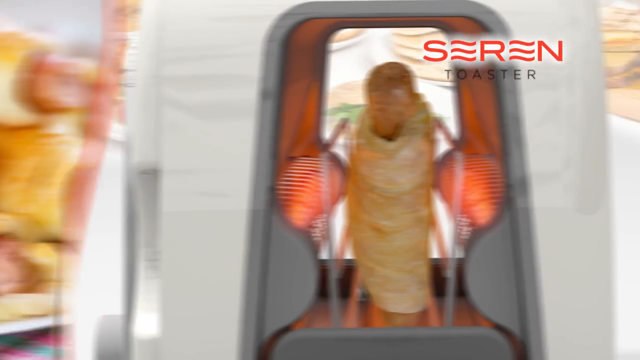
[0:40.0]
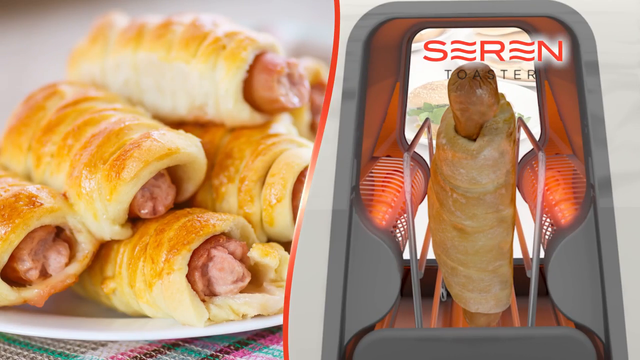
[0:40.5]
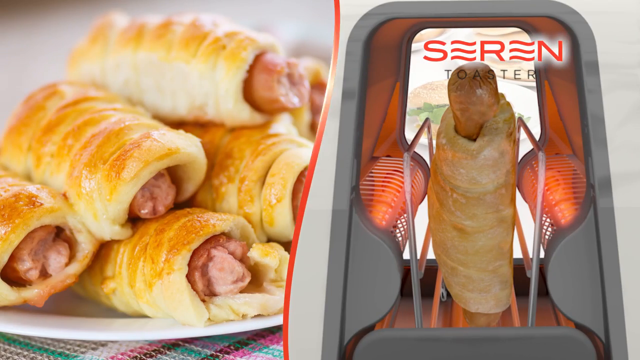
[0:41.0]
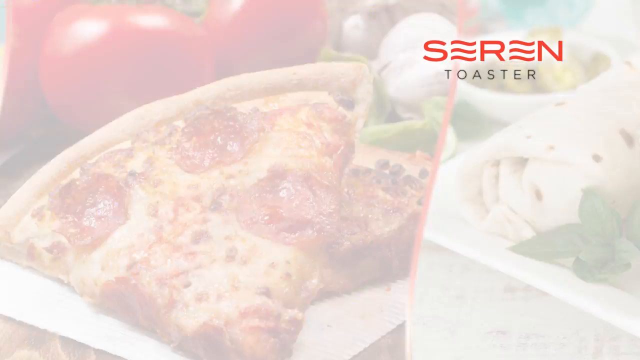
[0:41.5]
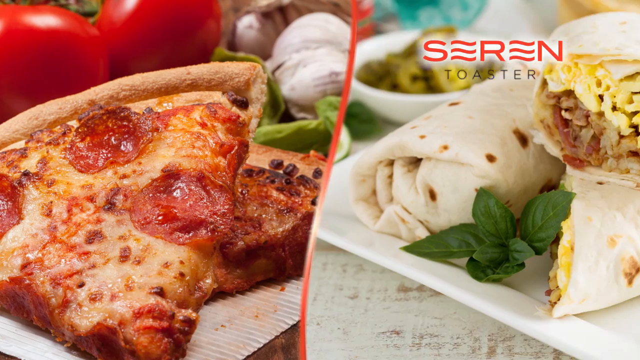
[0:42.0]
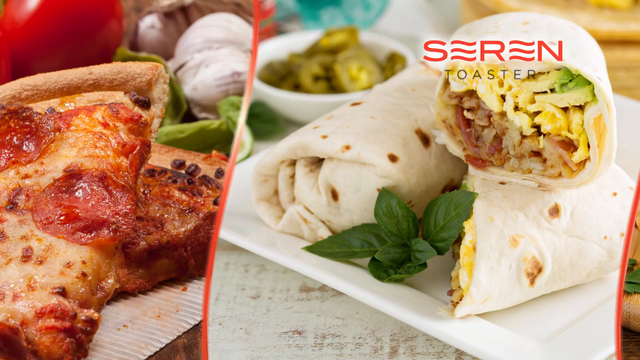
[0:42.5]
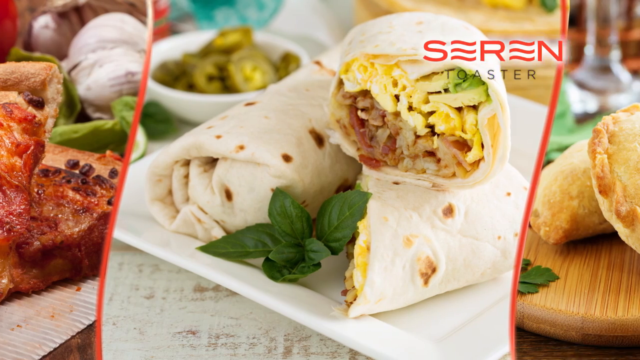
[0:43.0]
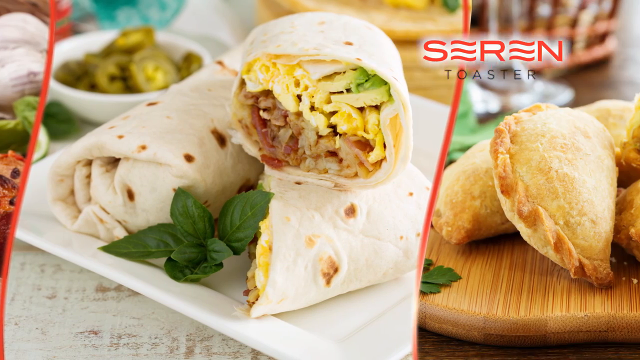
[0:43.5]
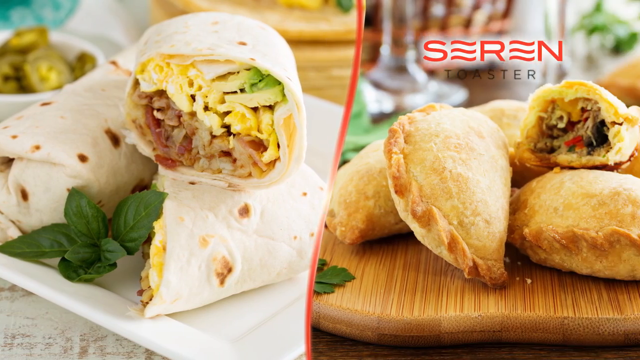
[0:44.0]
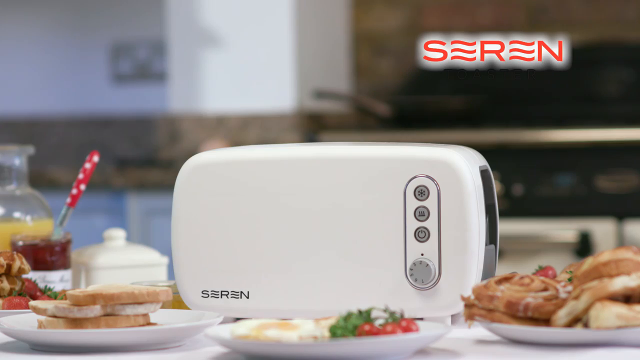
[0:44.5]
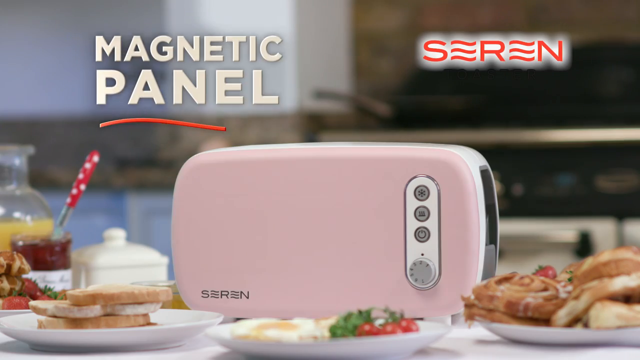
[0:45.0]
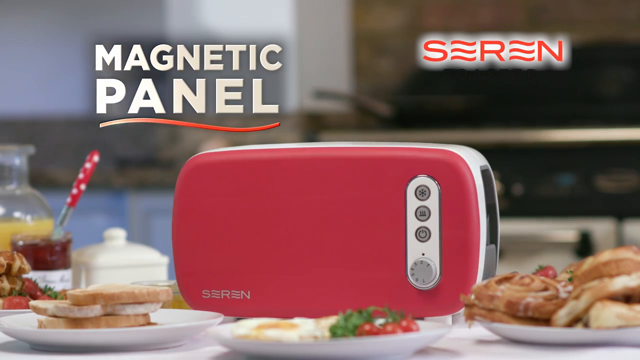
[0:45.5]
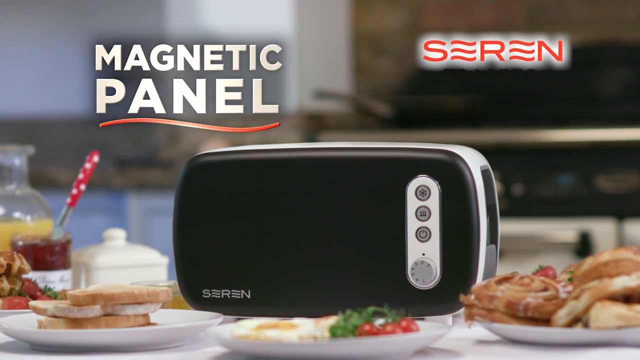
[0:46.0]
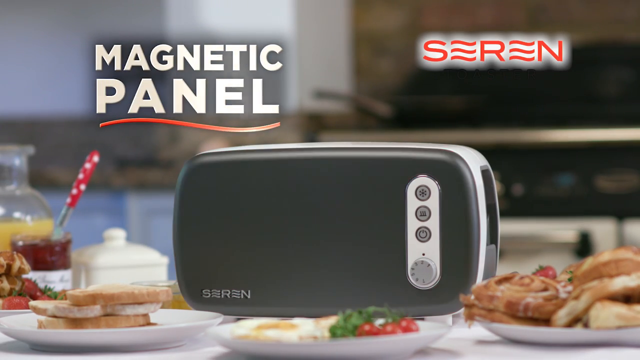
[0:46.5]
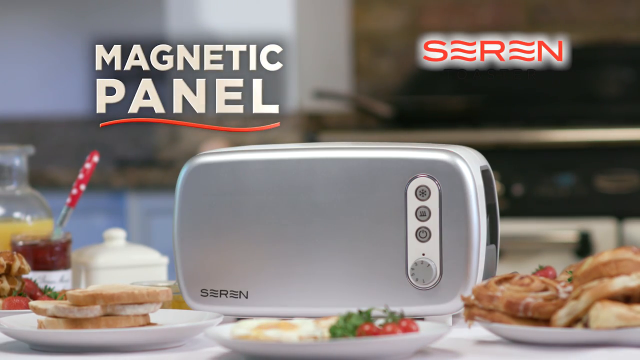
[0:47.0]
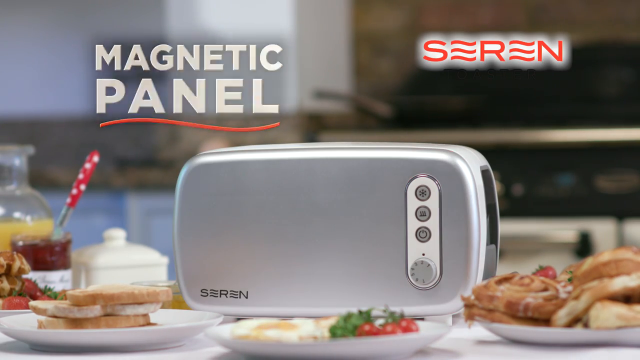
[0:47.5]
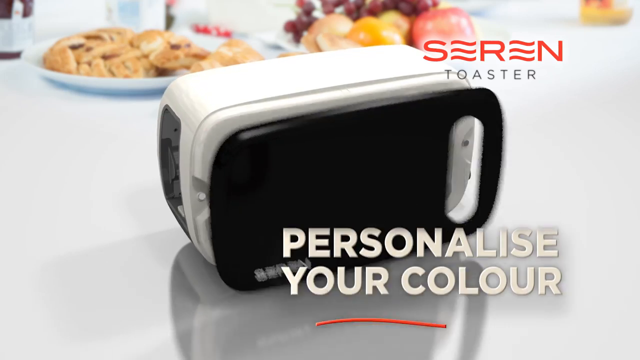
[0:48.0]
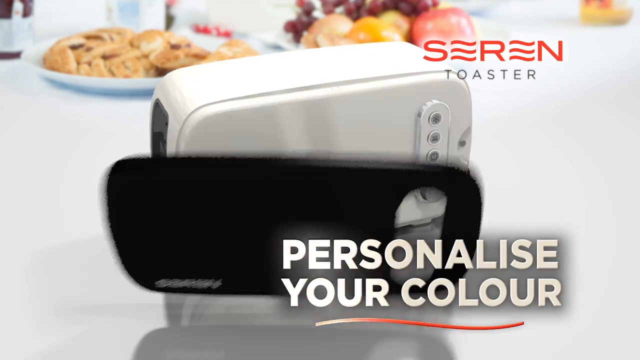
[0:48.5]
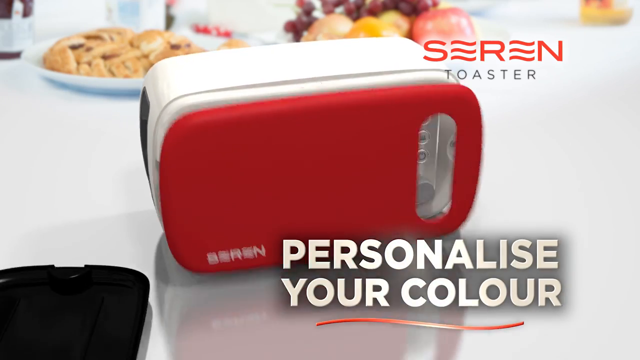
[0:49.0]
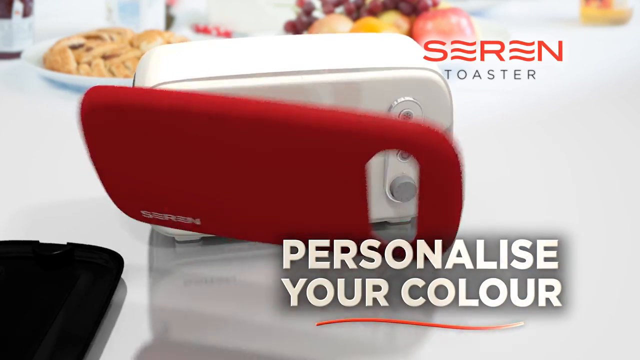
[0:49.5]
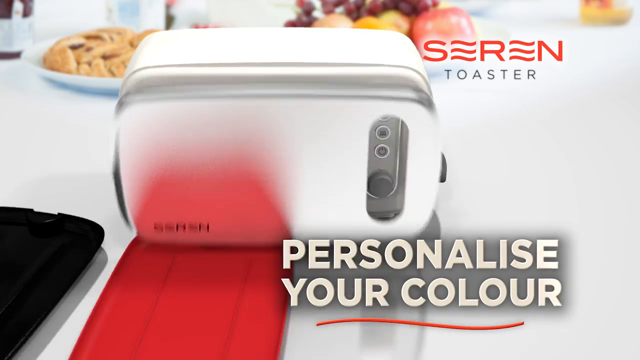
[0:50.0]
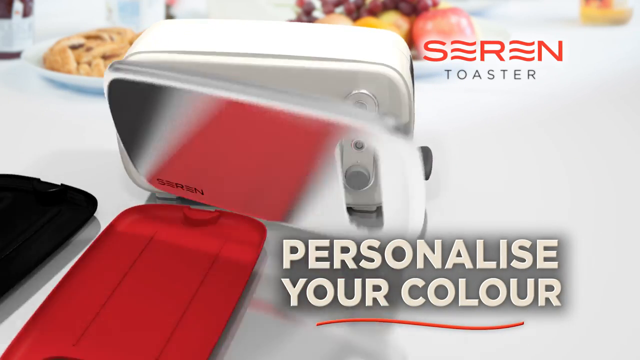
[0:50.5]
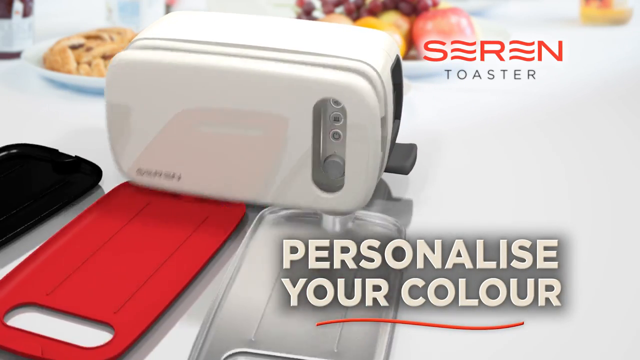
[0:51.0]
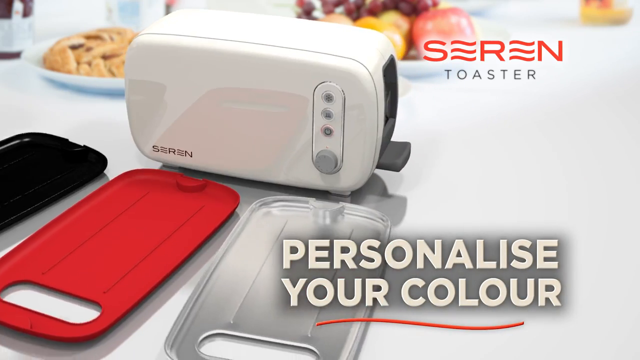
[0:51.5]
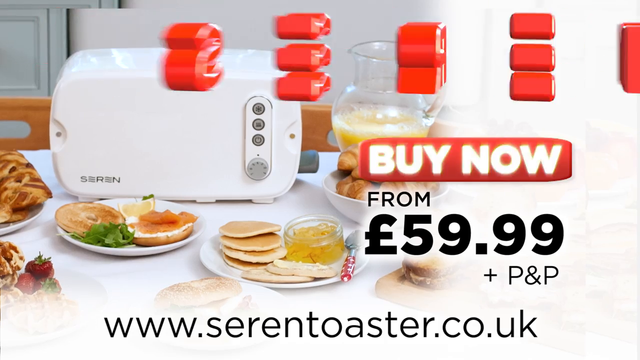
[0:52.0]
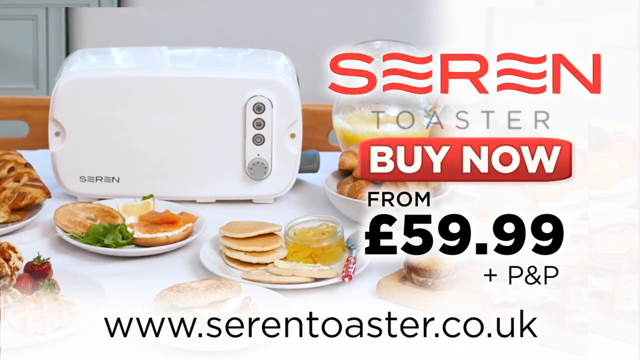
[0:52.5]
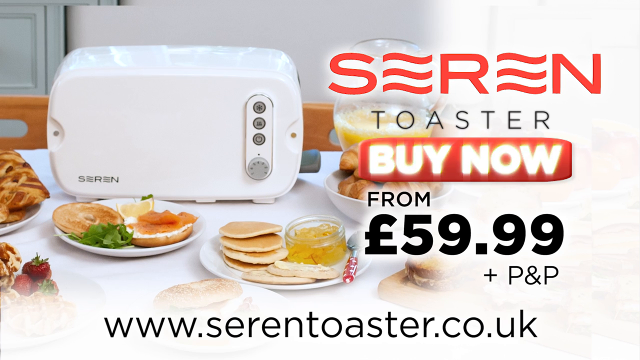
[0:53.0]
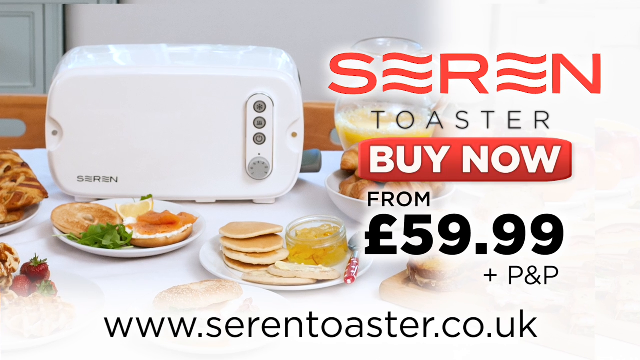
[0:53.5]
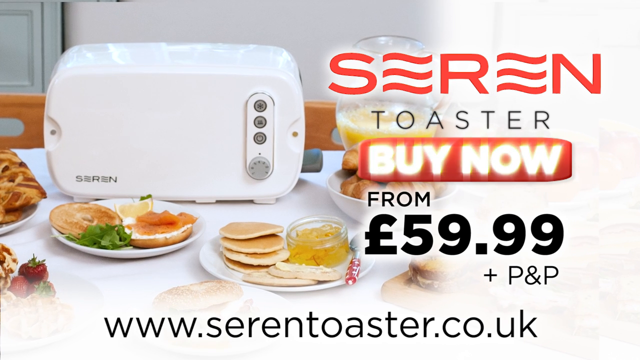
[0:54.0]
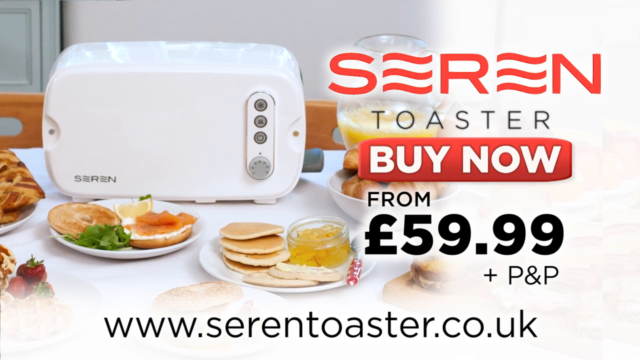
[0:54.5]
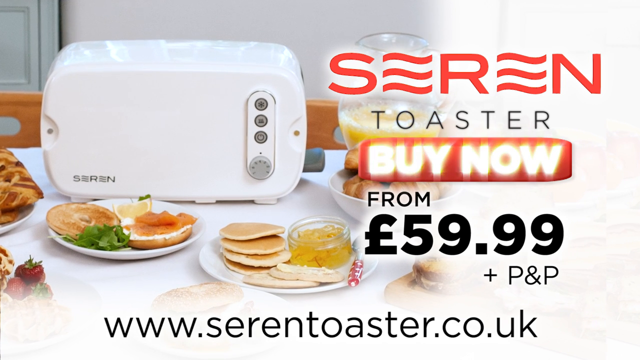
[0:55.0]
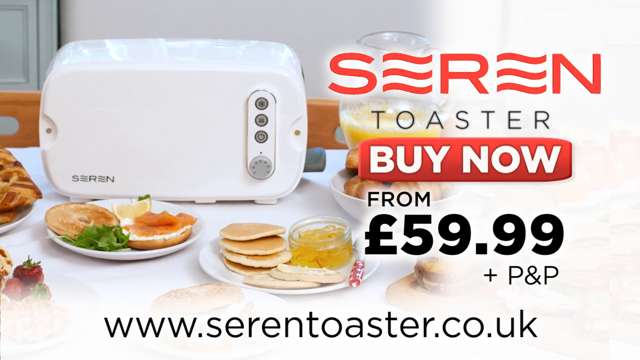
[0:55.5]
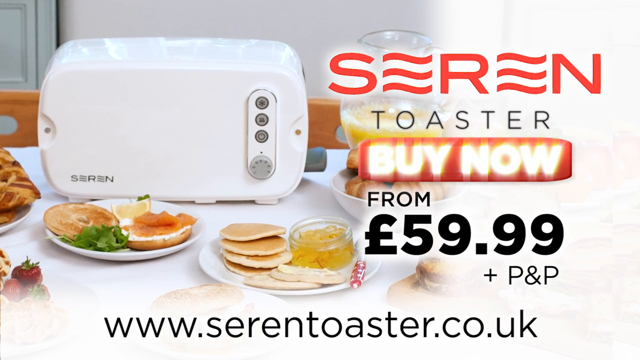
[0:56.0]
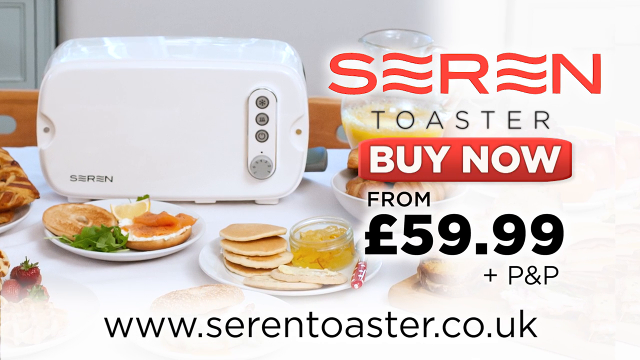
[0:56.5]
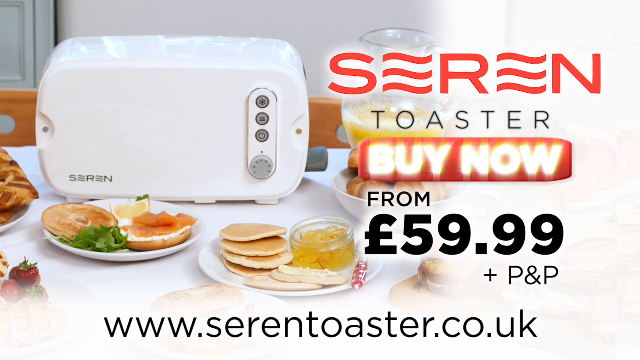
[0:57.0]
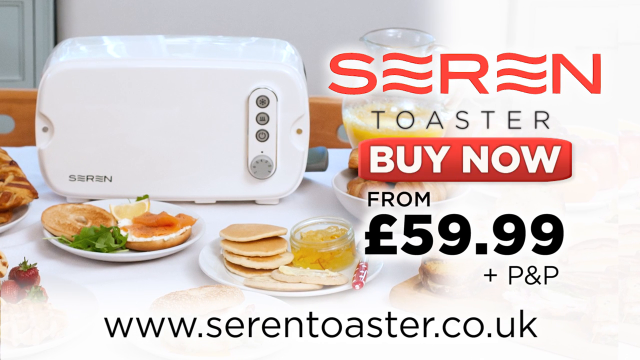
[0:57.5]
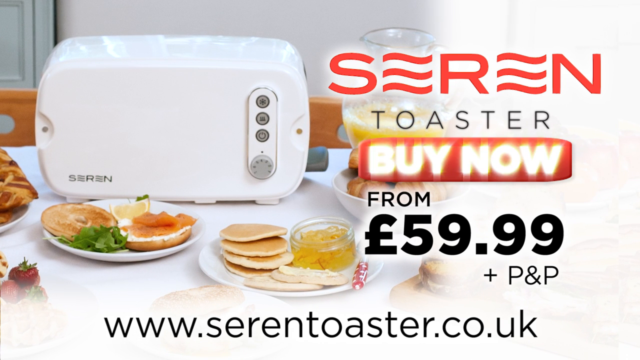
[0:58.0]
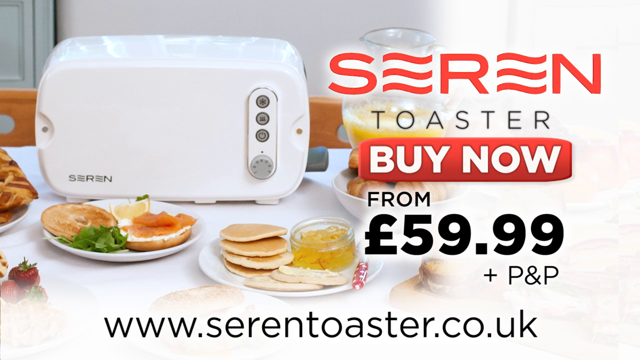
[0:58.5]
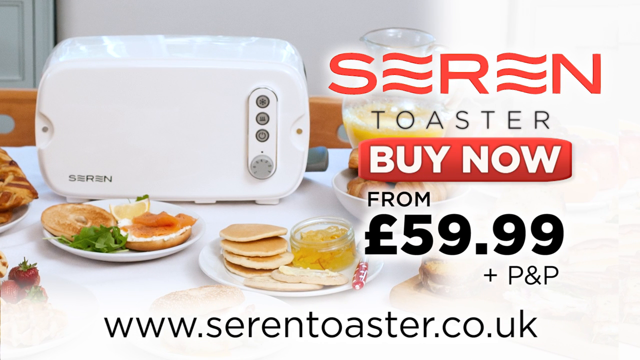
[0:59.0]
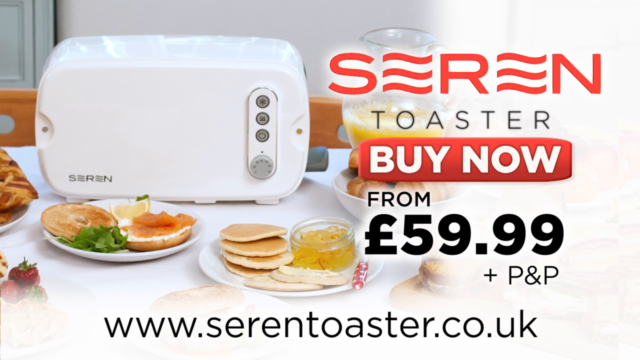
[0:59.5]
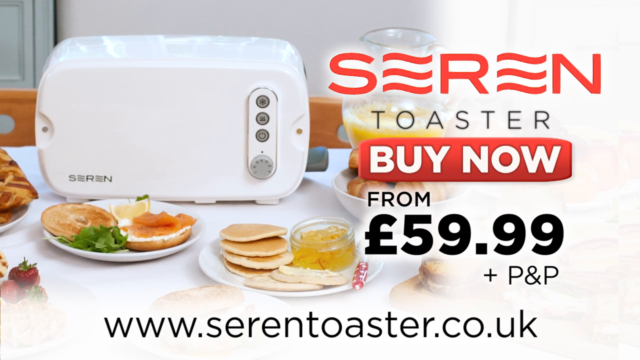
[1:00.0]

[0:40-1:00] On the left-hand side of the screen is a pile of five toasted pigs in blankets, pieces of hot dog wrapped in crescent roll dough. On the right-hand side is a view into the Seren toaster from the side, with a pig in a blanket inside and the heating elements glowing. A series of food images then pans by quite quickly: two pieces of pepperoni pizza stacked one on another; a flour tortilla wrap on a white square plate with a green piece of mint; and another wrap cut in half, its end showing what could be crumbled sausage, scrambled egg and avocado, a breakfast wrap. Next are what appear to be hot apple pies or meat pies. The white toaster is then shown in a kitchen, with transparent, blurred-out food products on either side of it, a cinnamon roll on the right and some jam on the left, the focus almost entirely on the toaster. The Seren logo is in the upper right-hand side, and in white bold text on the upper left it says "magnetic panel" with a red squiggly line underneath. A series of colored magnetic panels is put on the front of the toaster, in order light pink, dark pink, and silver or chrome. A new image shows colored panels flipping on and off the toaster. The final image shows a white Seren toaster on the left and stacked text on the right reading "Seren Toaster" and "Buy now" in white text in a red box, flashing in bold, highlighted text five or six times. Below this it says "59.99 pounds", then "P&P", and at the bottom is "www.sarentoaster.com" in black text.